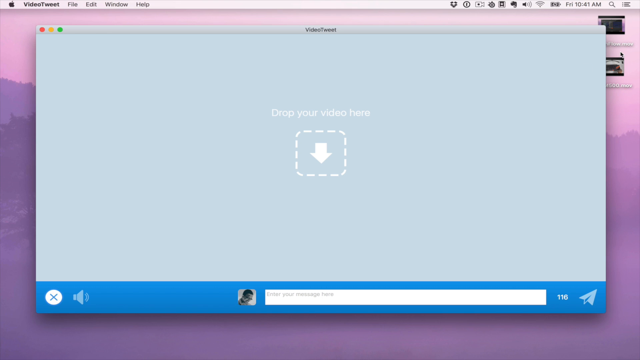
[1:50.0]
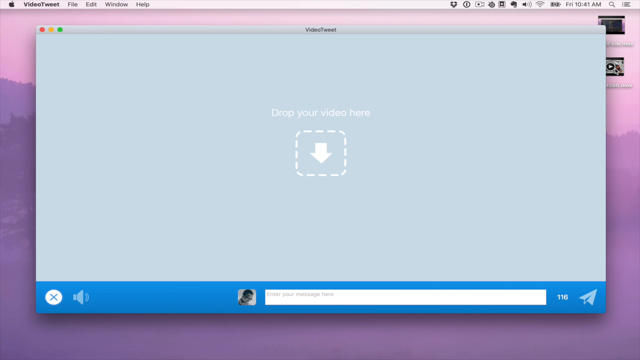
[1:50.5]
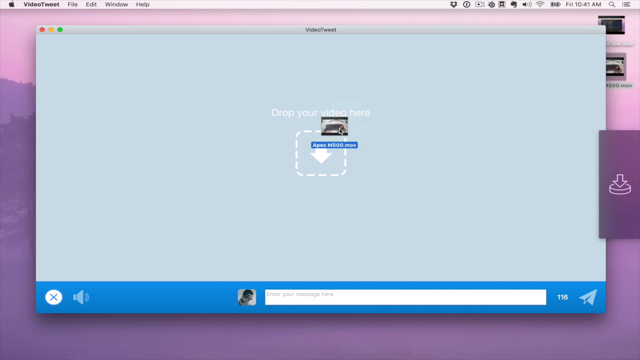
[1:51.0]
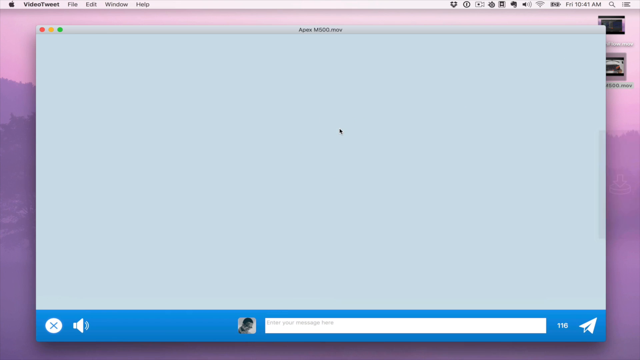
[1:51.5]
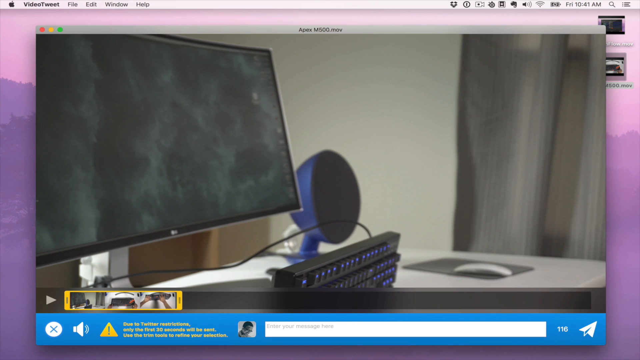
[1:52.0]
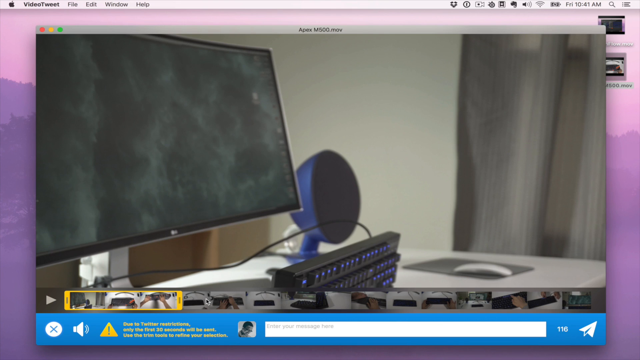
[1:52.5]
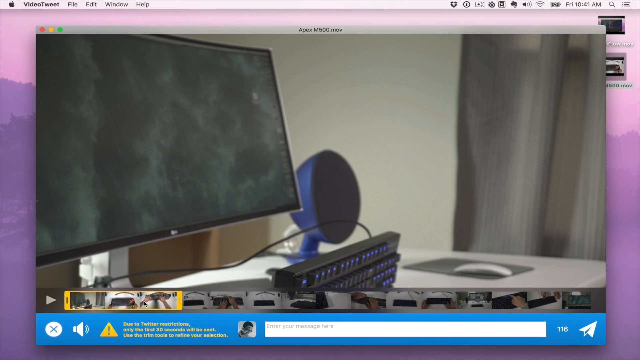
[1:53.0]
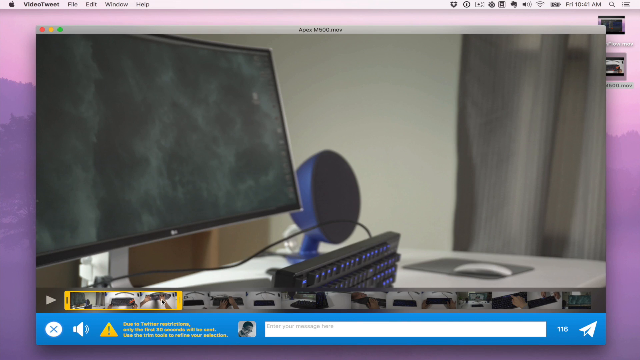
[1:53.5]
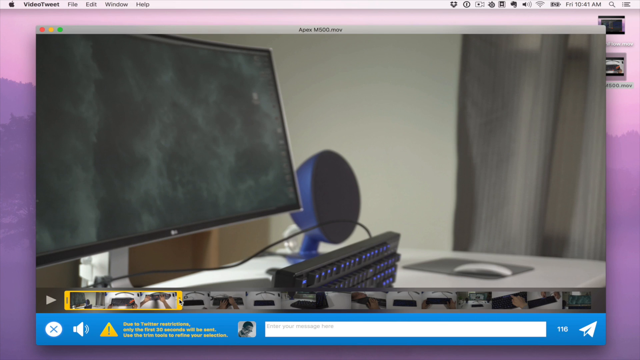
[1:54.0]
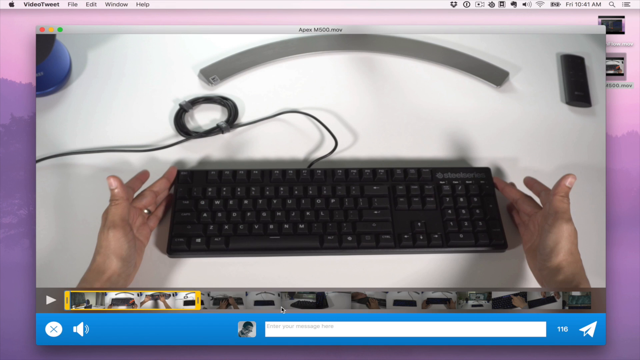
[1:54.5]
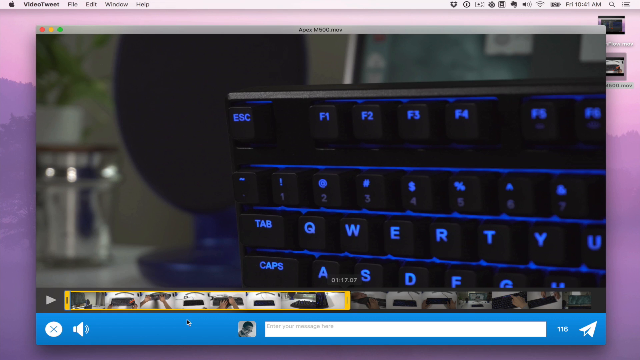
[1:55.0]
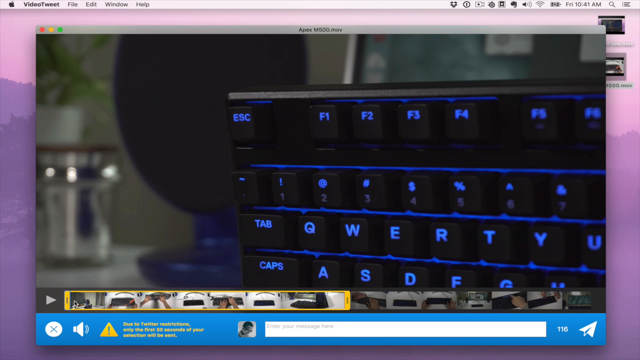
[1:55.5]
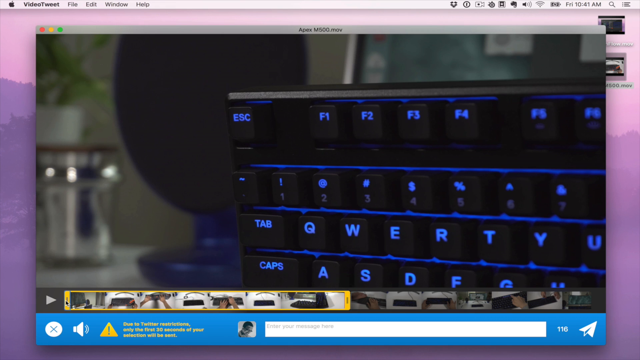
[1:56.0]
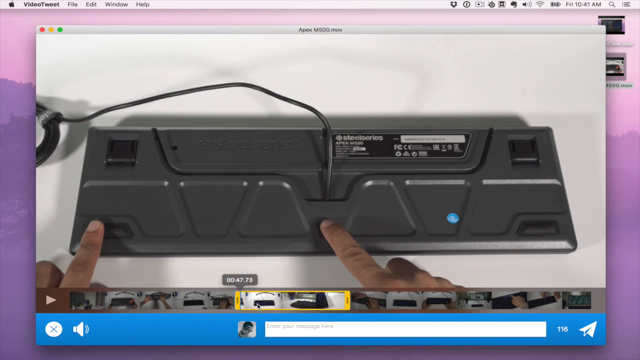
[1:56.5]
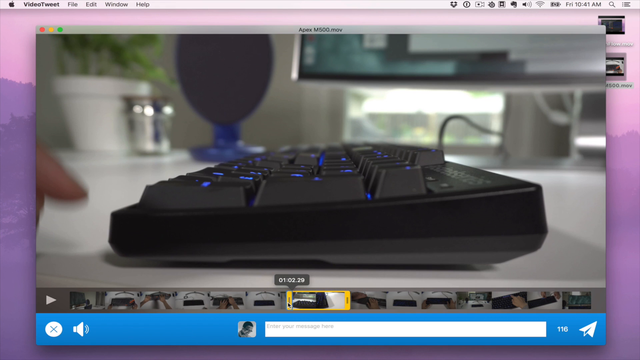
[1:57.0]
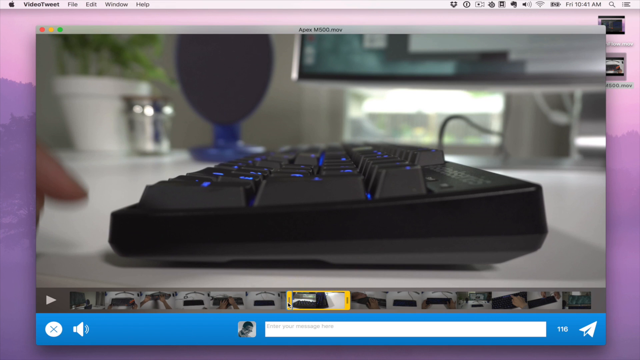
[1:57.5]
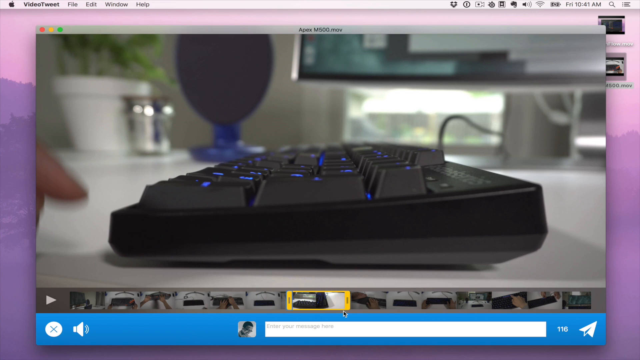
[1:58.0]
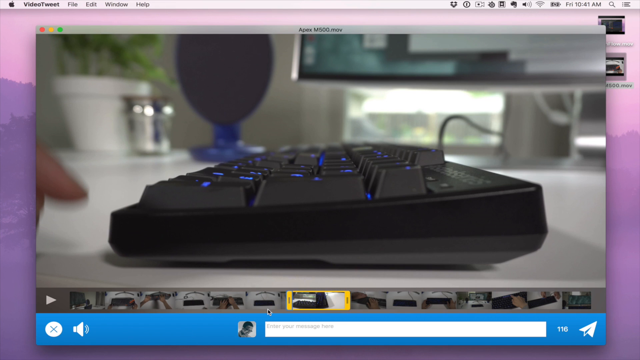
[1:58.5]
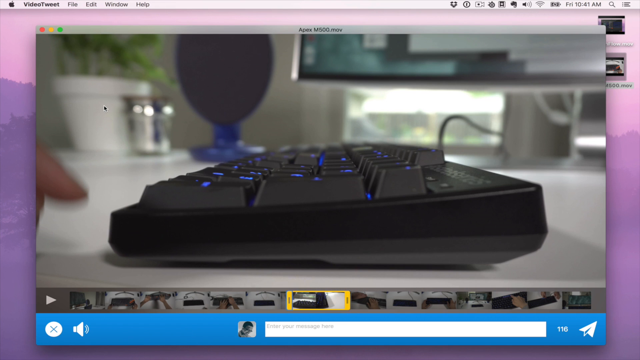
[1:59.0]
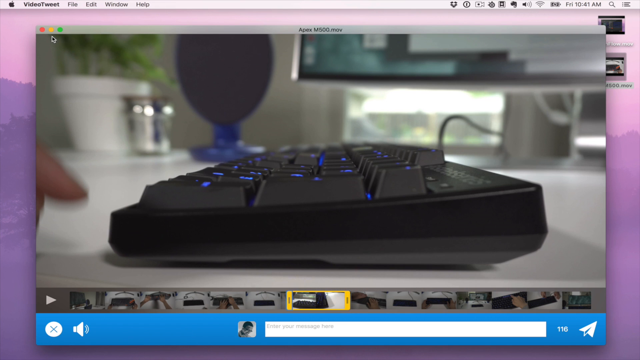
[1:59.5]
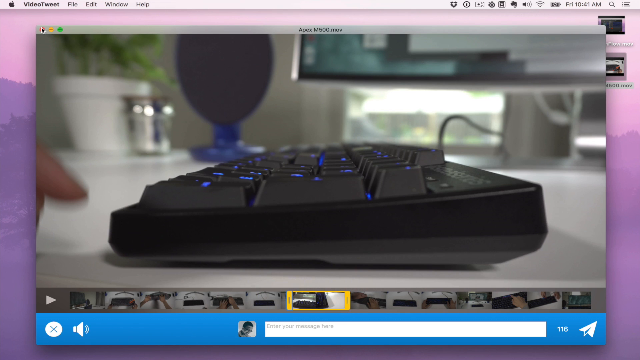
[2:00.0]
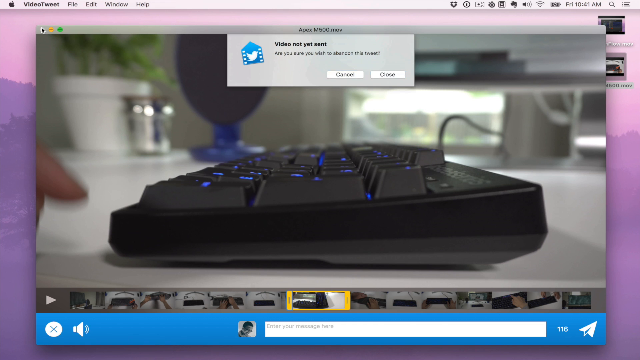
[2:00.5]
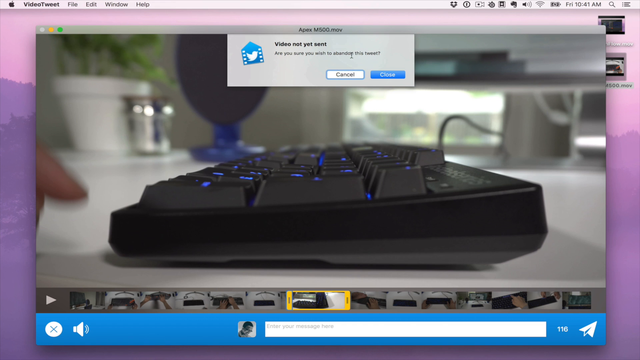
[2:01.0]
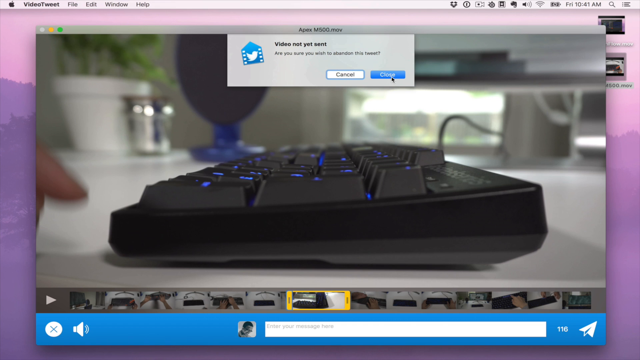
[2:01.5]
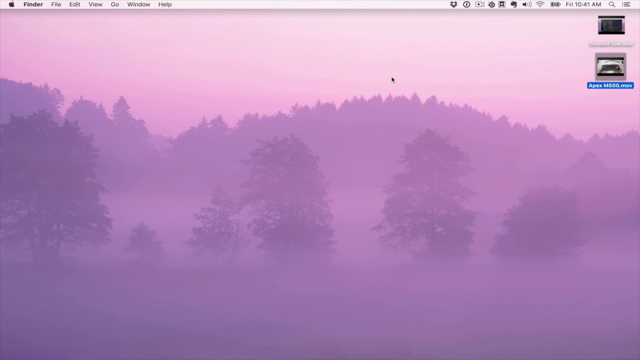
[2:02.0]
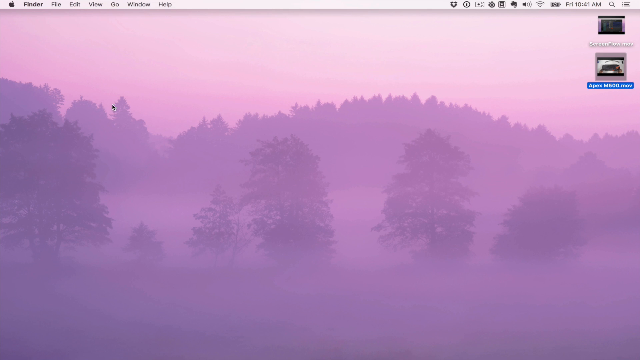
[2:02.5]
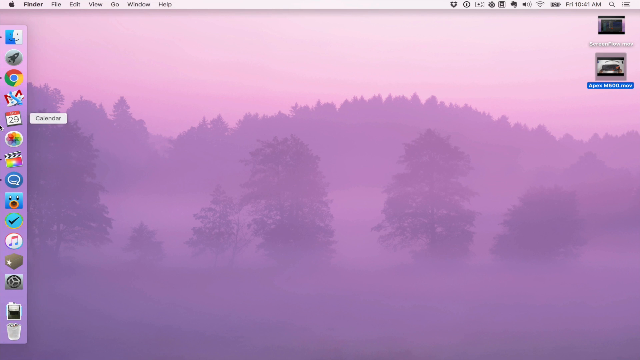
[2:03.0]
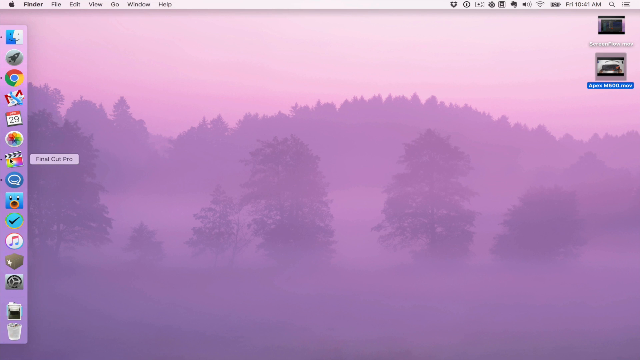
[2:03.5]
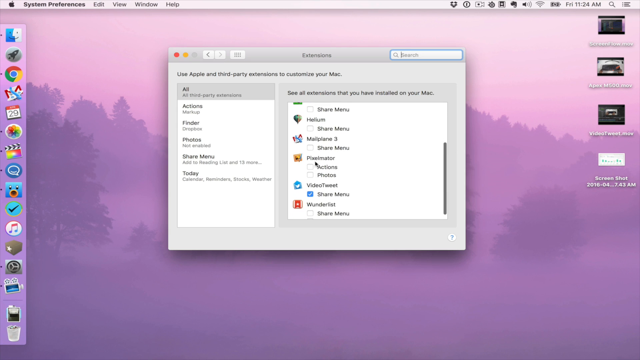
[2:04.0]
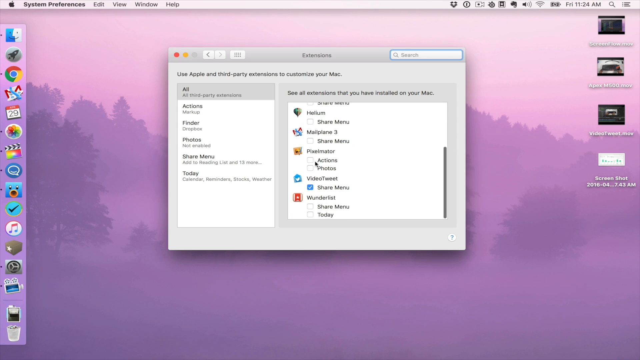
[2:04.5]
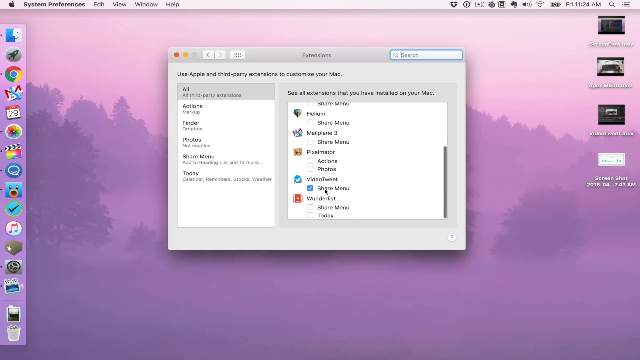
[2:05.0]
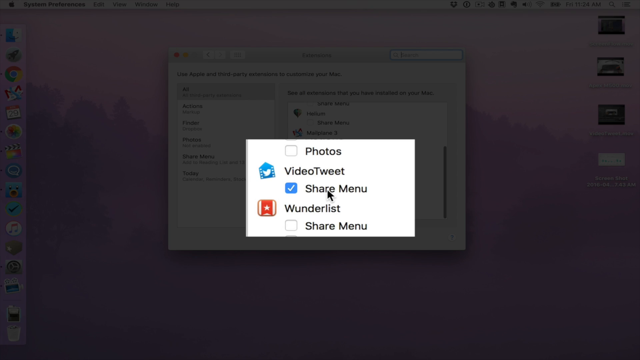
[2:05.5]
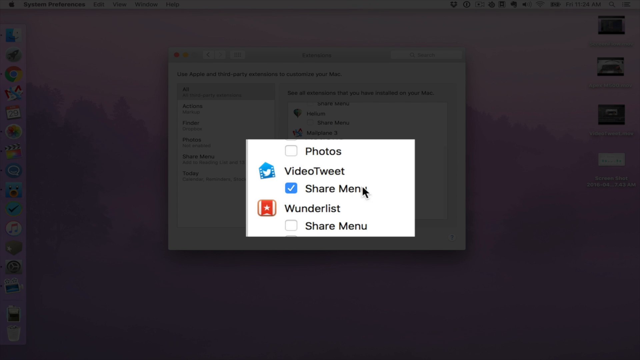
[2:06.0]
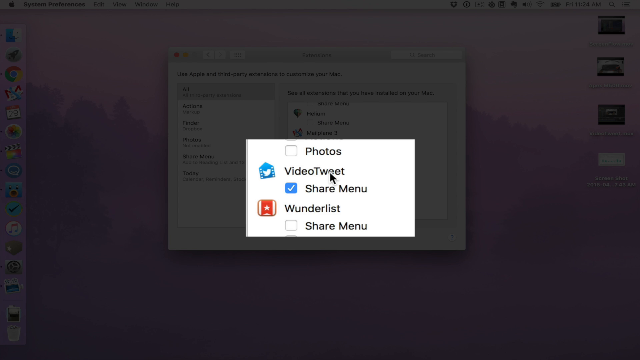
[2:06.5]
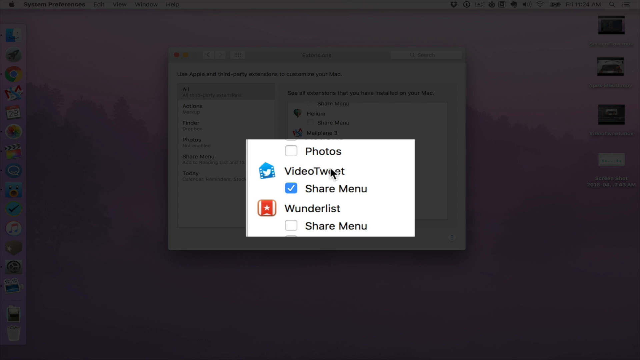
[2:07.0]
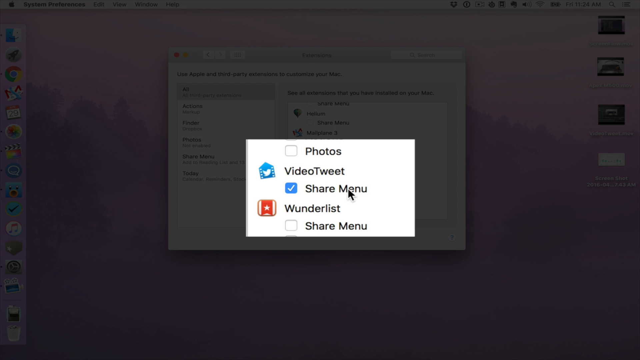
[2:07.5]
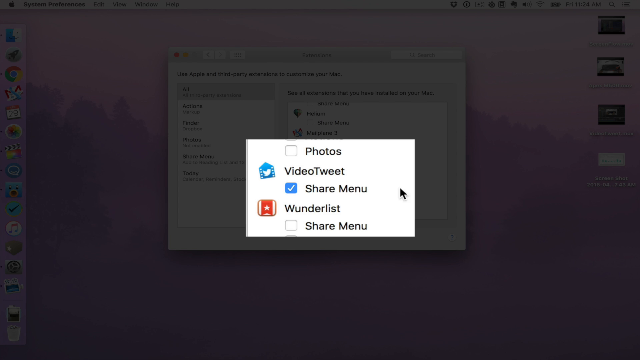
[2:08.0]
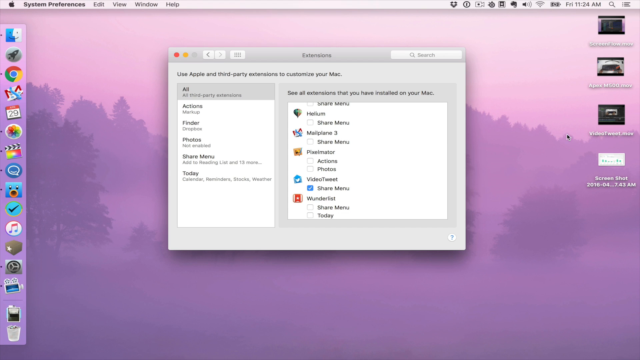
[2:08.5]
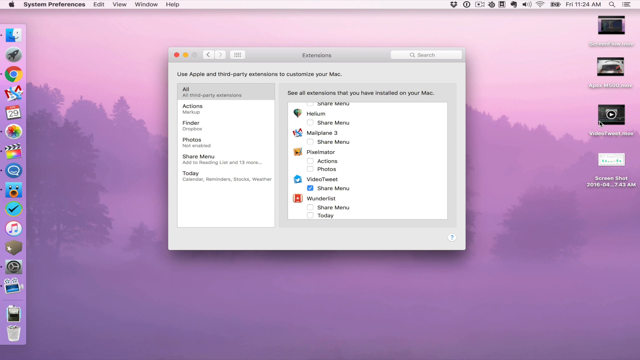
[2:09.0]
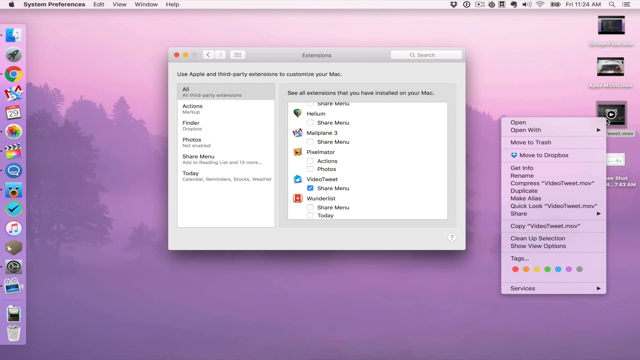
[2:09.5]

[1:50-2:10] The cursor moves to the top right of the desktop and selects the lower of the two videos there, dragging it across to the middle of the screen, at which point a grey vertical panel appears at the far right of the screen with a downward arrow inside it. The video is dropped into the middle of the VideoTweet app, which loads a preview of the video in the main part of the screen. The horizontal video timeline bar surrounded in yellow is lit below, and in the blue horizontal section underneath a yellow alert triangle appears with yellow text reading "due to Twitter restrictions only the first 20 seconds will be sent. Use the trim tools to refine your selection". The preview shows a side-on shot of the monitor with the keyboard set on its end in front of it. The cursor grabs the right-hand part of the yellow trim tool and pulls it further along, and the preview changes to a close-up of the top left of the keyboard, lit up in blue. The cursor then moves the left-hand side of the trim tool along until it stops at a side-on shot of the keyboard. With this small section selected, the cursor moves to the red close icon in the top left of the VideoTweet program, and a grey box moves down from the top of the program reading "Video not yet sent. Are you sure you want to abandon this tweet?" with options to cancel or close. Close is selected and the program disappears, leaving the purple pink desktop background. The cursor moves to the far left of the screen, where the vertical app icon bar moves out, and then moves down over the icons and opens one. A box appears in the middle of the screen with "extensions" at the top and underneath "this uses Apple and third-party extensions to customize your Mac". The cursor moves over a scrollable box of options to the right and hovers over VideoTweet. This area is boxed out in white and zoomed up into the centre of the screen, showing "VideoTweet" with the option "share menu" underneath and a blue tick next to it. The section zooms back in, and the cursor moves to the top right of the desktop, where a third video now appears underneath the two that were there already. The cursor clicks on it and a grey pop-up appears next to it with a vertical list of command options.